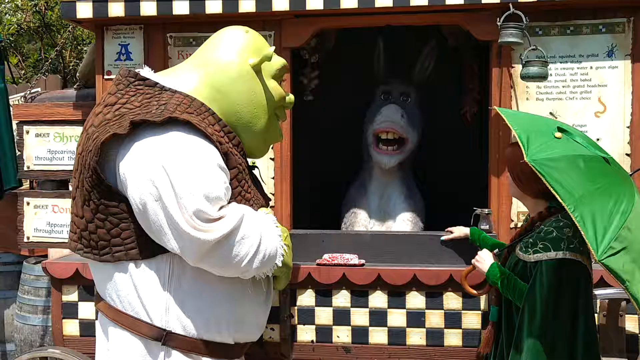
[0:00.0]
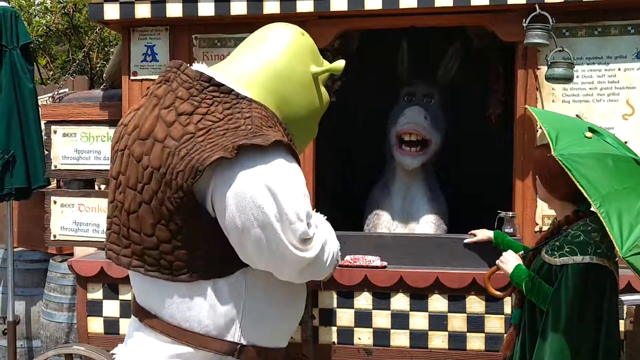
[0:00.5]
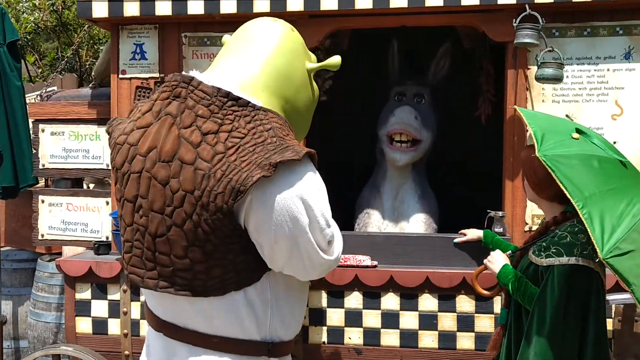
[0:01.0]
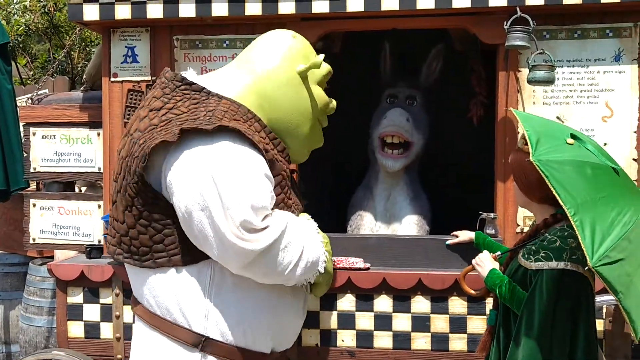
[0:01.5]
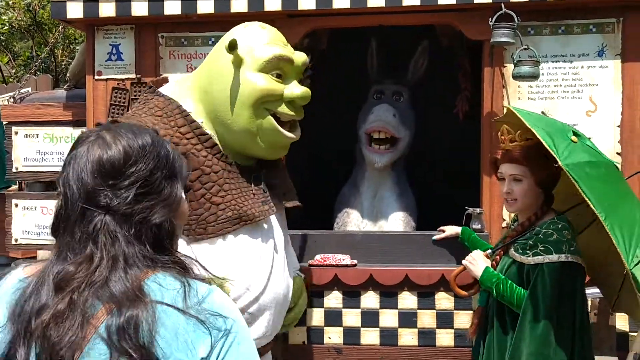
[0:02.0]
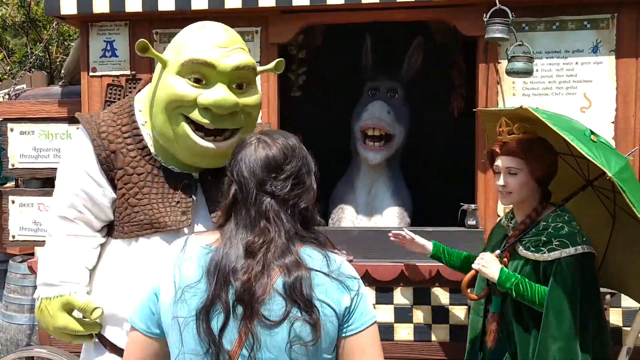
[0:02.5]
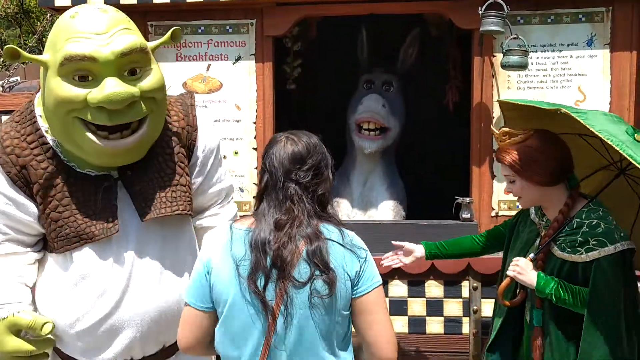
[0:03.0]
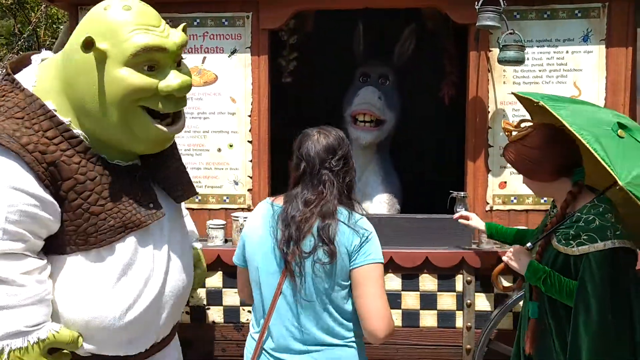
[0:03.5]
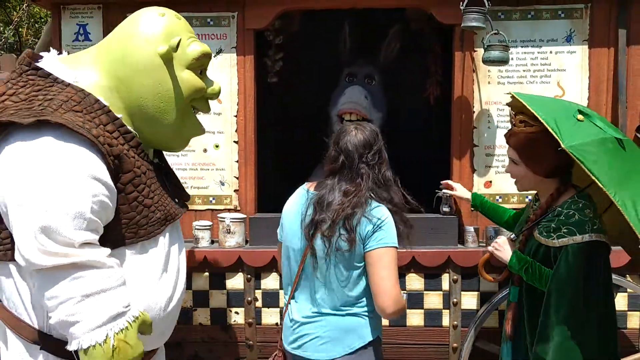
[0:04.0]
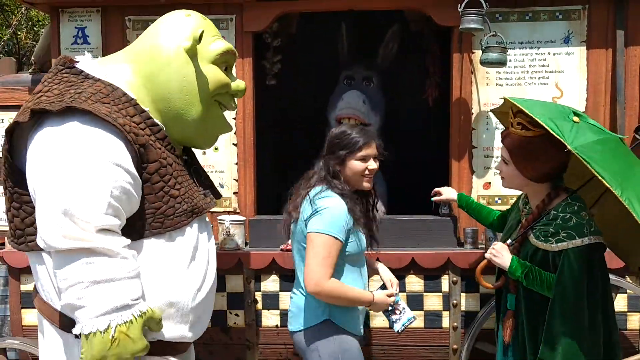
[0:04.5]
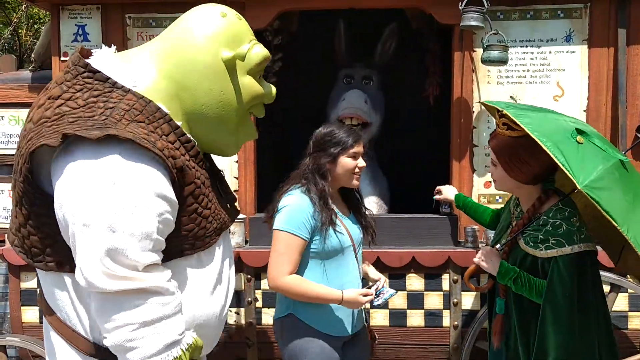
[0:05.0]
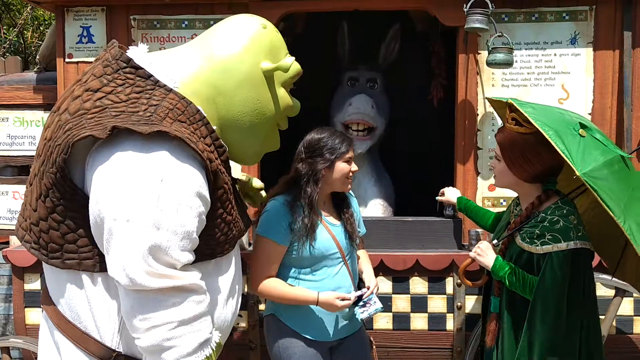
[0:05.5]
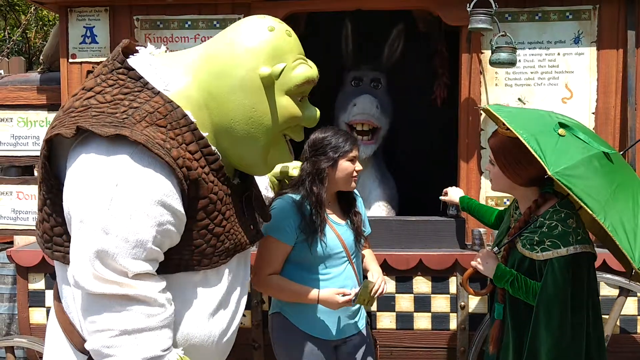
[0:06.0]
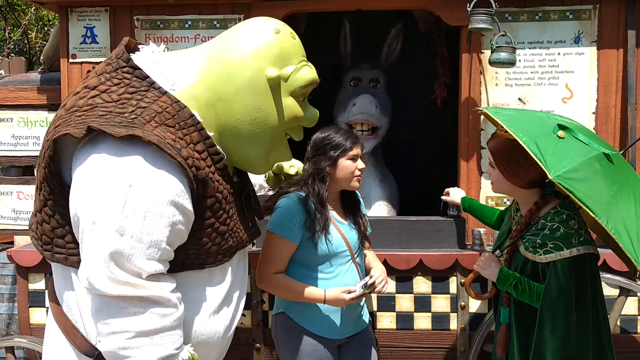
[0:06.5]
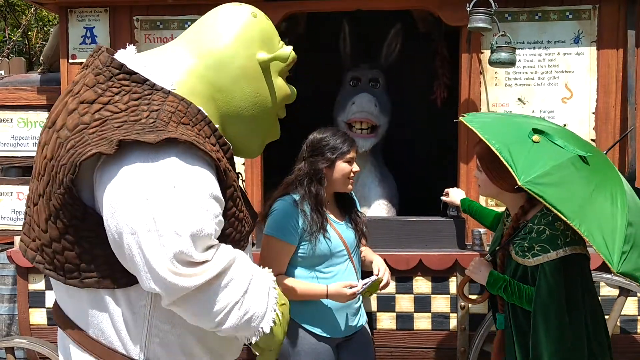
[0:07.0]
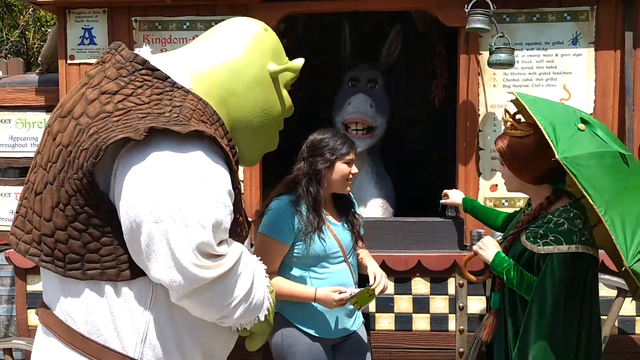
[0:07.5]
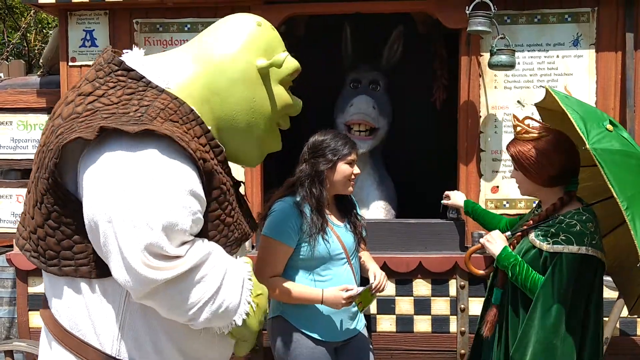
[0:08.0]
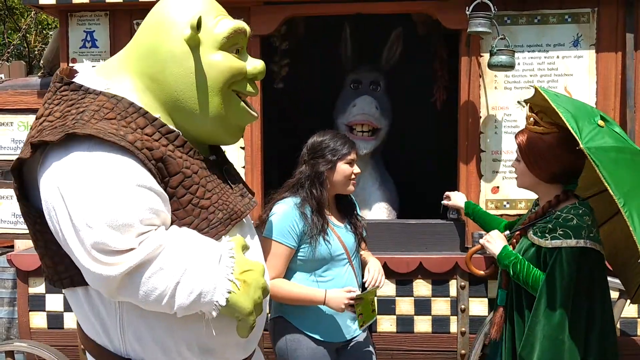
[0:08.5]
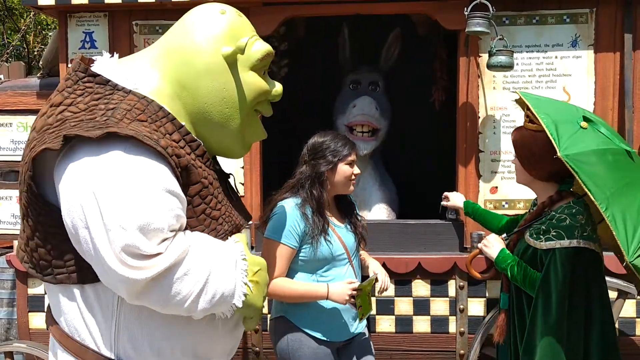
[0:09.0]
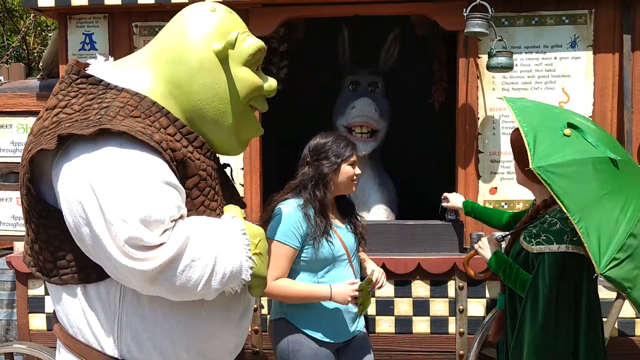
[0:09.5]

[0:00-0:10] A person in a Shrek costume and a person in a Fiona costume, characters from the Shrek movie, are talking to Donkey, who is in some type of concession stand, with the person in the Donkey costume behind the booth. It is an outdoor festival, with a tree on the left-hand side. A girl walks up to the stand, maybe to purchase a ticket or something. She wears a light aqua top and has dark, kind of shiny, slightly wavy hair, and she looks like a teenager, maybe in her early 20s. She stops and the characters speak to her. Shrek puts his hand on her shoulder for a moment, and it looks like the character dressed as Fiona is primarily the one who says something to him. Fiona is dressed in green and has a green umbrella, Shrek wears a white shirt and a vest, and Donkey is behind the stand, apparently standing on two legs since his paws are out to the front.